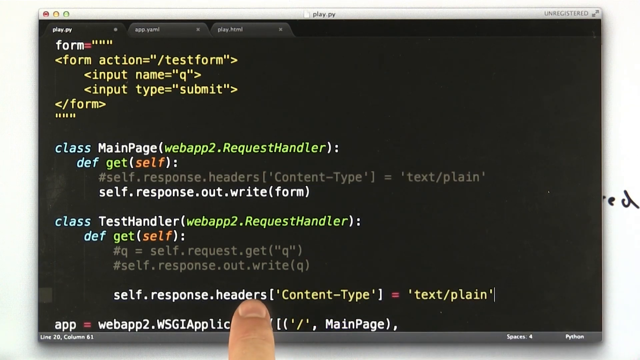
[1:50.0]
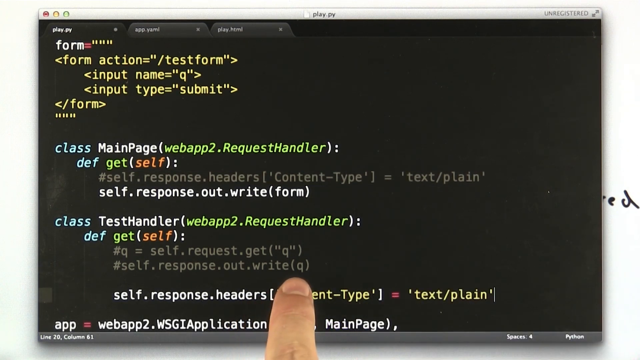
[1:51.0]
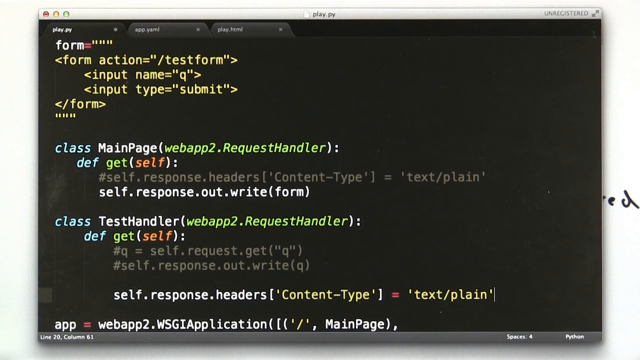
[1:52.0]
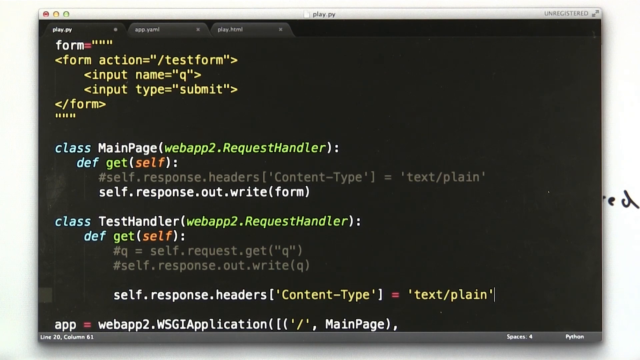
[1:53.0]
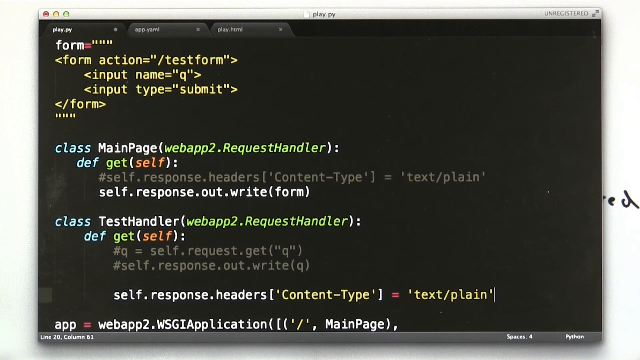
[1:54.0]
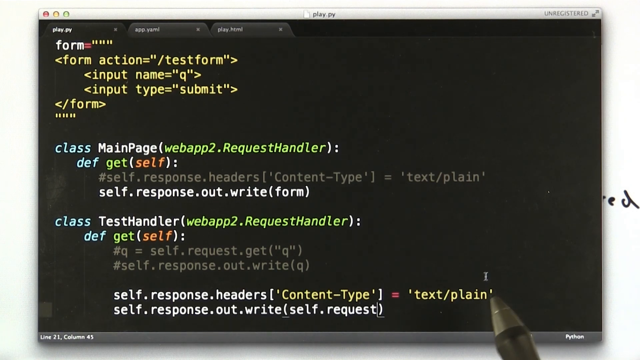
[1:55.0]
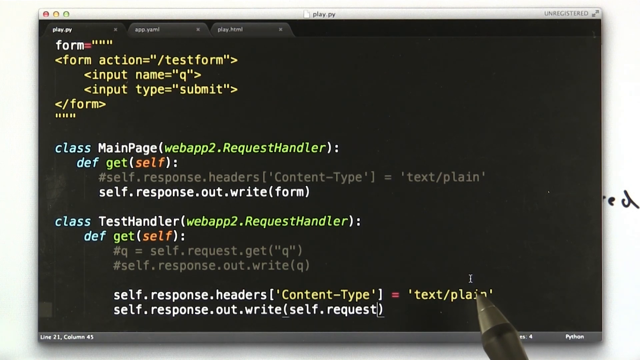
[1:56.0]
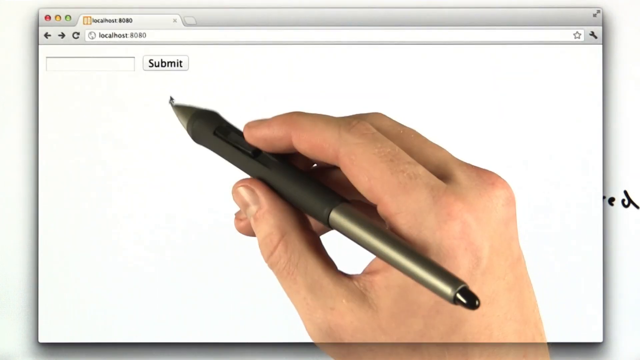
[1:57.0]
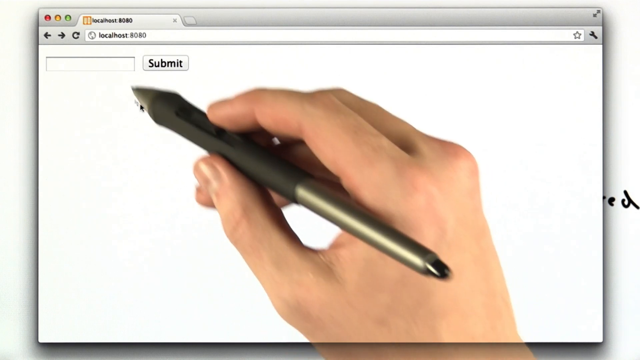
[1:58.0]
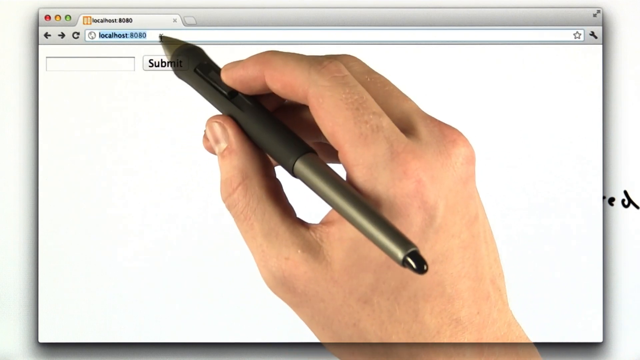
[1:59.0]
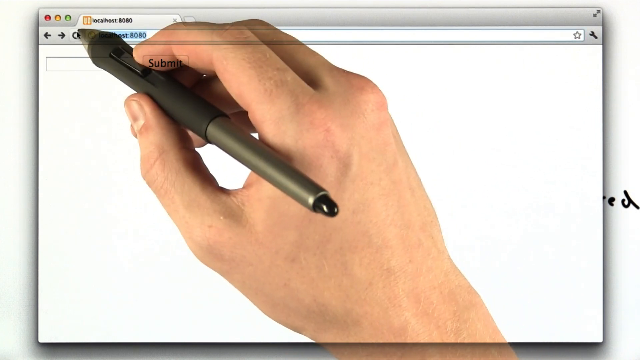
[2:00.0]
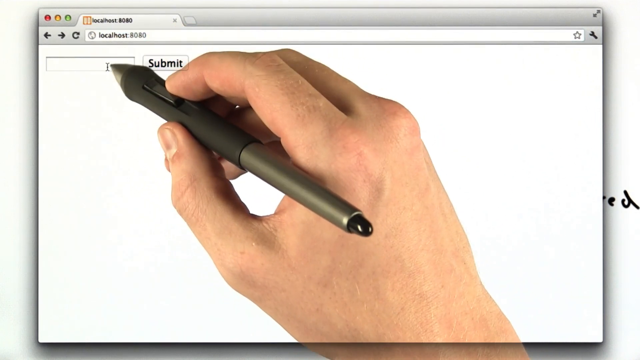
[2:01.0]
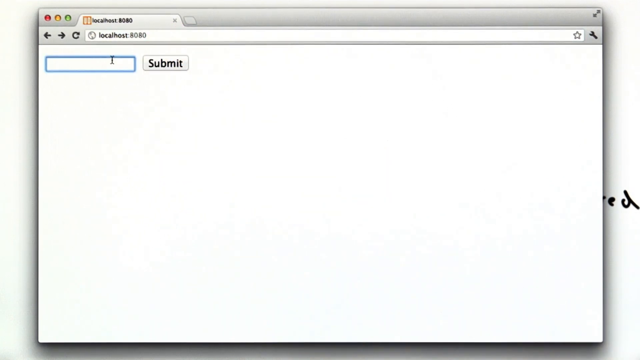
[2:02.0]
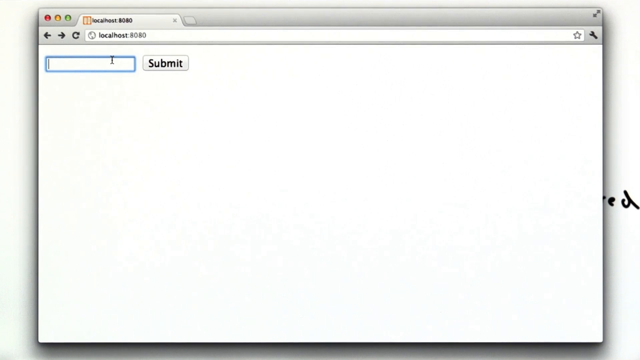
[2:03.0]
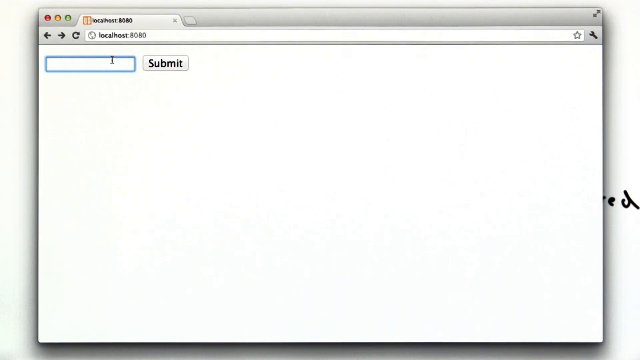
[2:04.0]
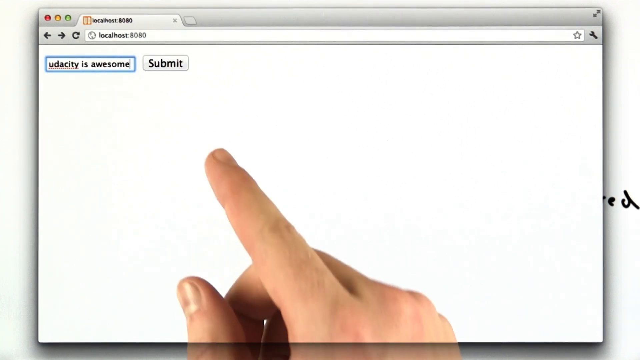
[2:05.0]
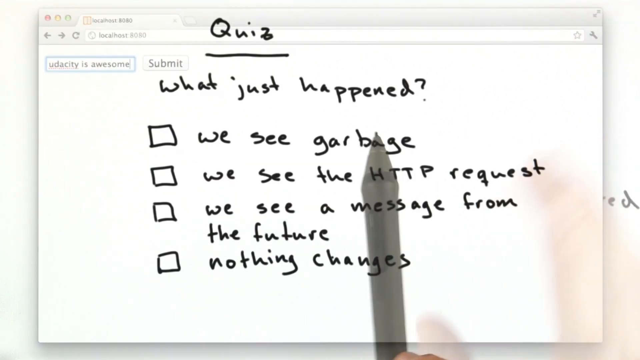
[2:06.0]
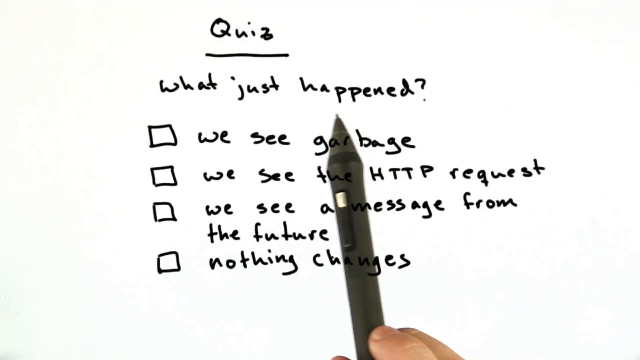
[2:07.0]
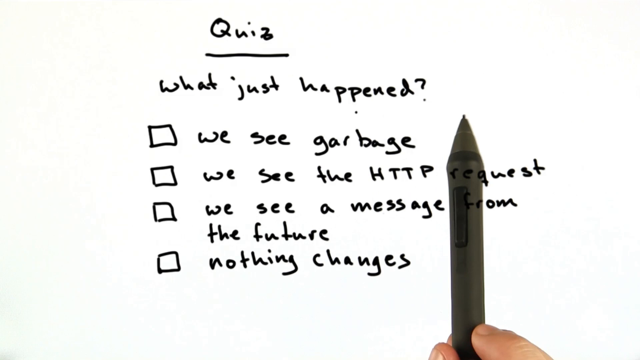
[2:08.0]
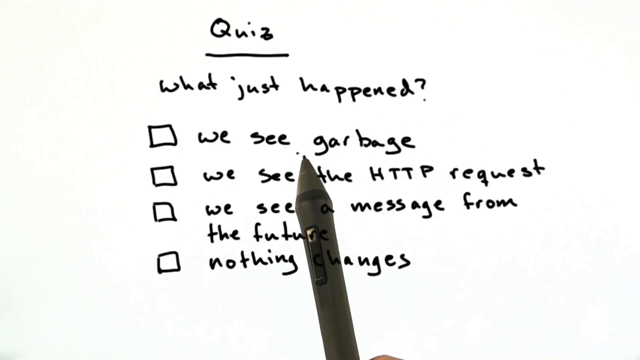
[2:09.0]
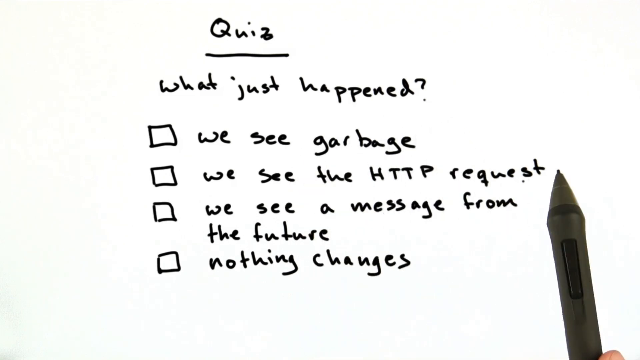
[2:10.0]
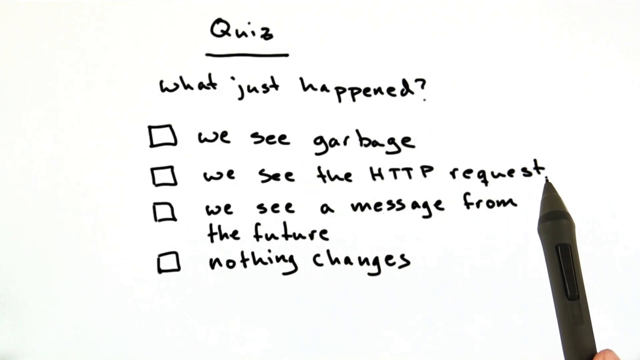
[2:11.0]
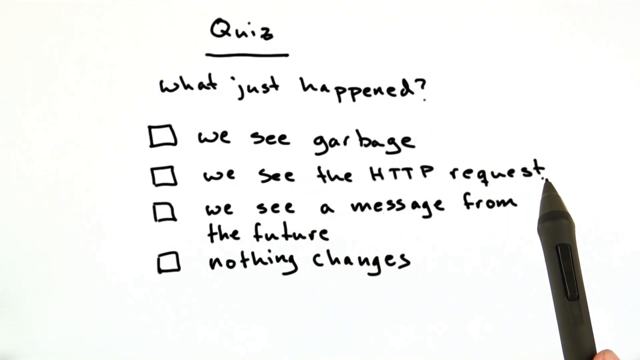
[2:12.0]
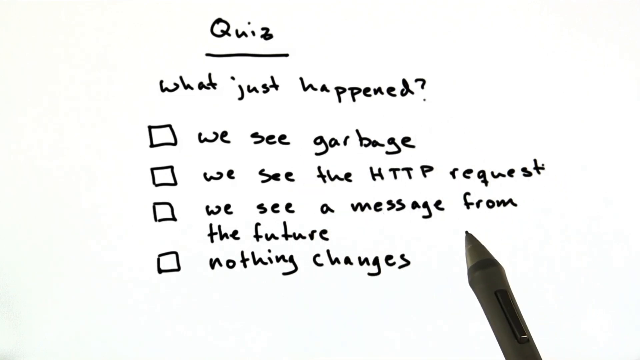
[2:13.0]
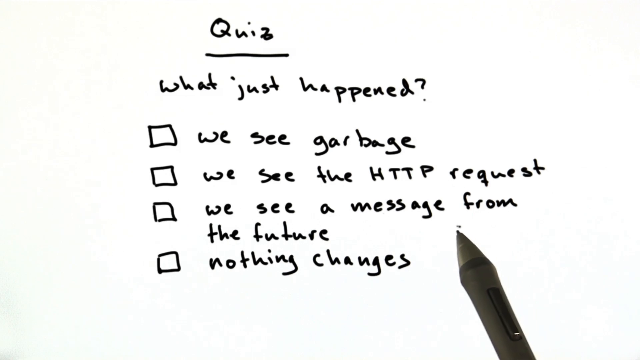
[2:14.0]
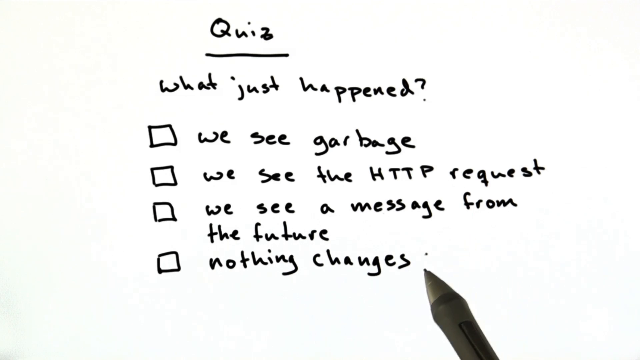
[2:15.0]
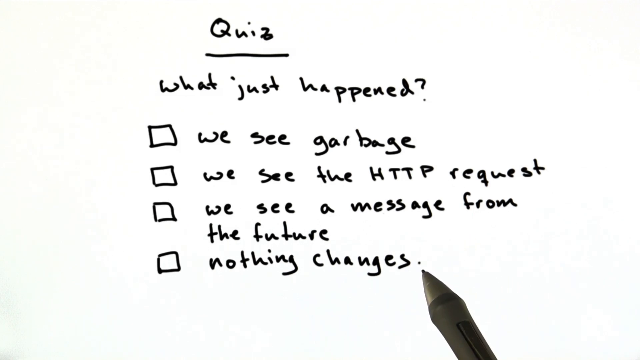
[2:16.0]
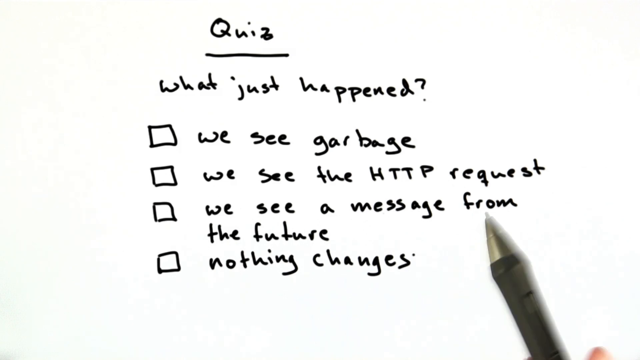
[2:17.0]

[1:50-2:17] The code is shown on a black background, for an app the developer is making and expanding on. He executes the program again, which opens a webpage he created with the app, and clicks the refresh button so the page refreshes. The webpage has a text box and a submit button. The developer types "Udacity is awesome" and executes the program. He then presents a quiz with a checklist beside each option about what is happening with the webpage. The quiz is in black text on a white background.